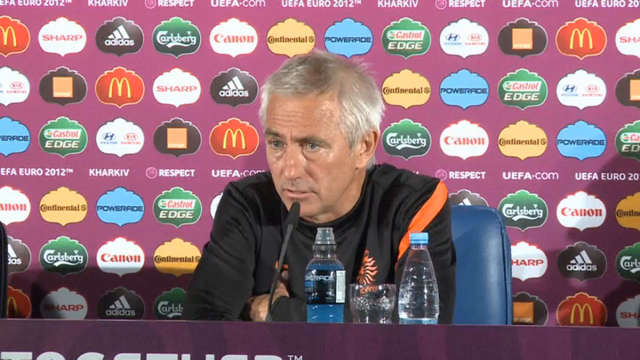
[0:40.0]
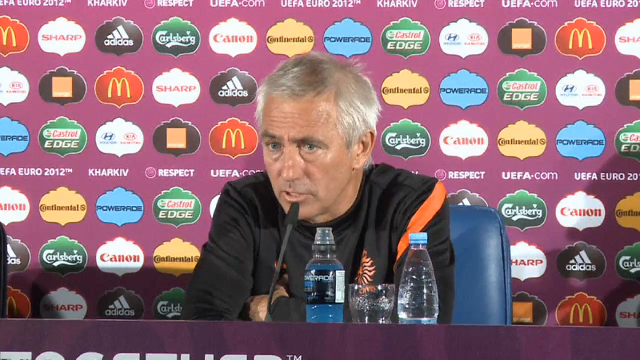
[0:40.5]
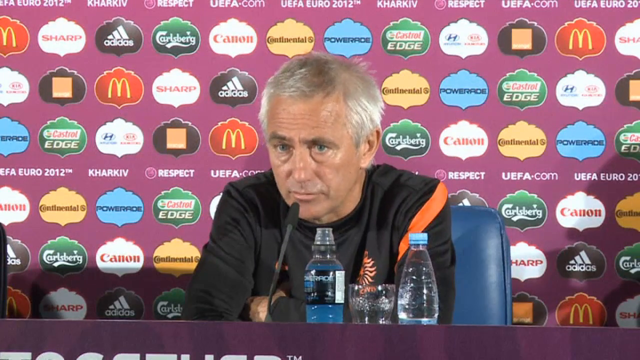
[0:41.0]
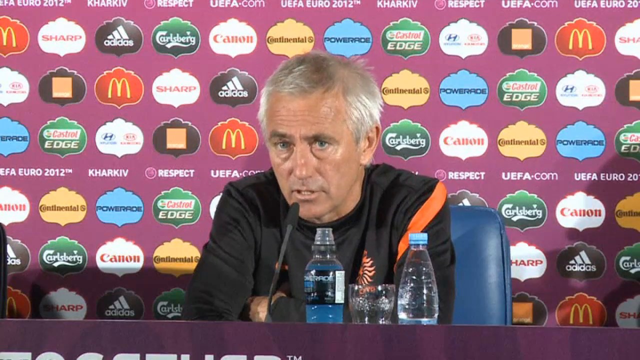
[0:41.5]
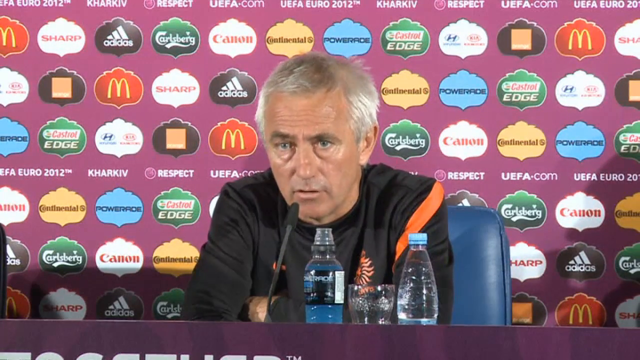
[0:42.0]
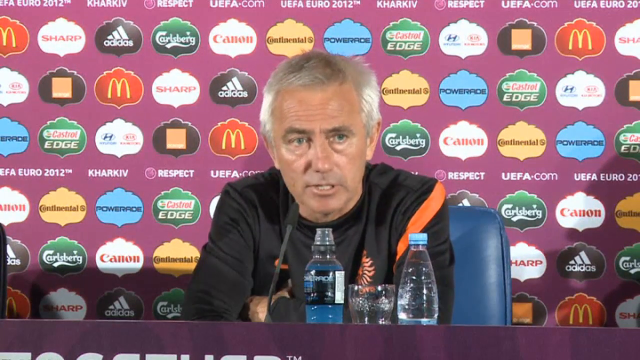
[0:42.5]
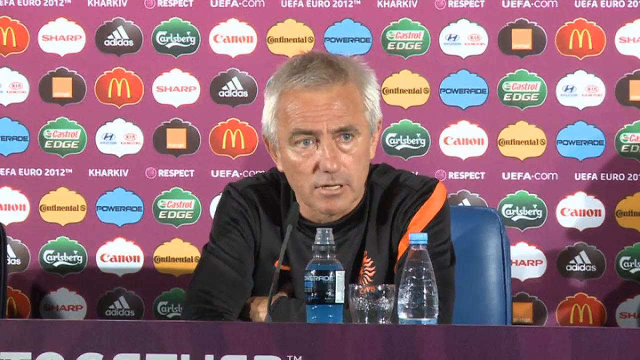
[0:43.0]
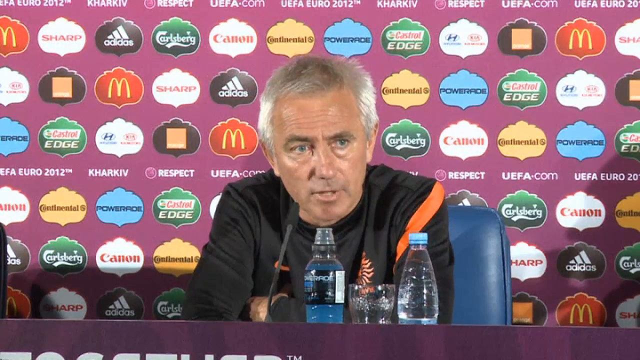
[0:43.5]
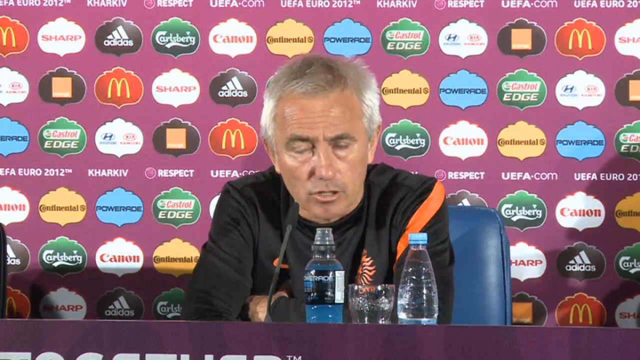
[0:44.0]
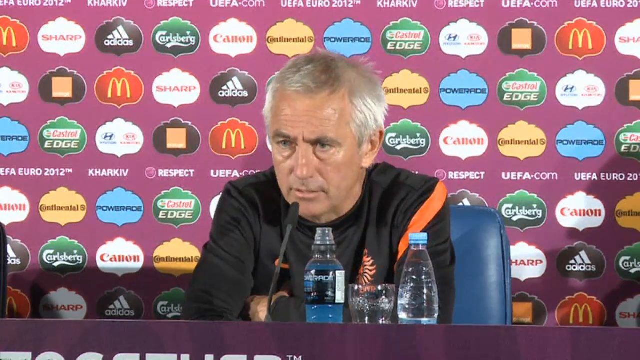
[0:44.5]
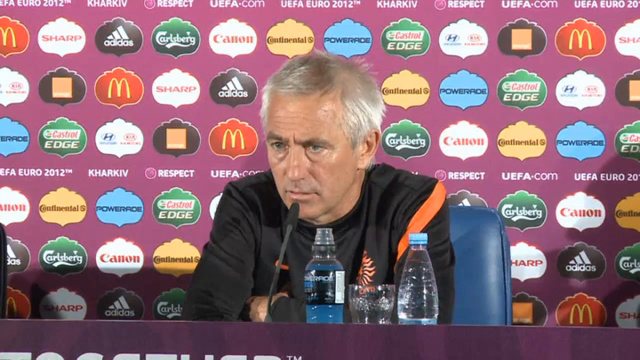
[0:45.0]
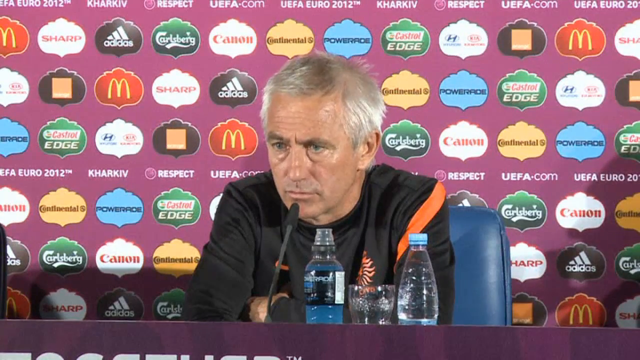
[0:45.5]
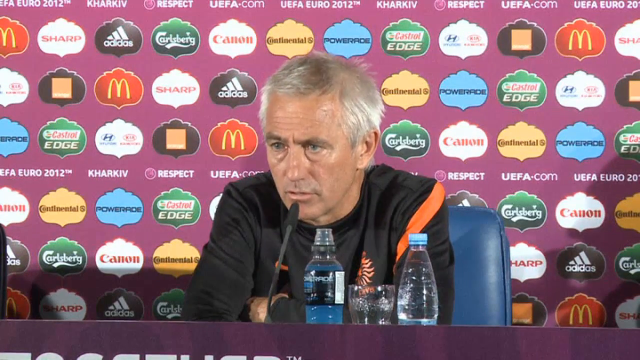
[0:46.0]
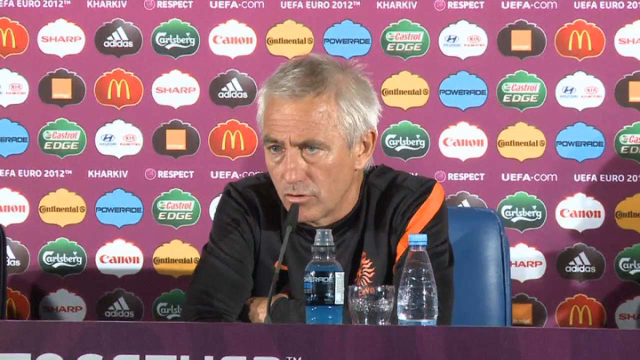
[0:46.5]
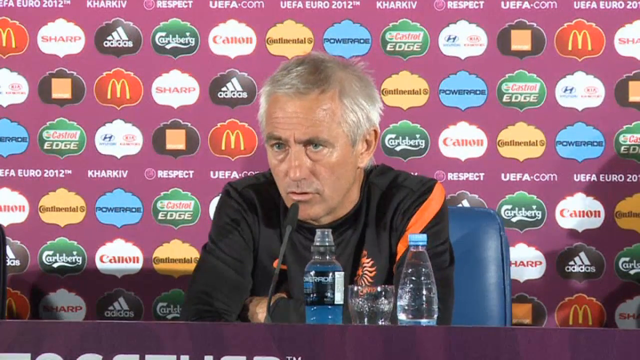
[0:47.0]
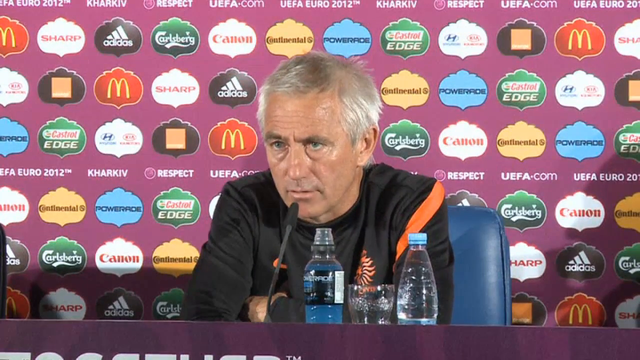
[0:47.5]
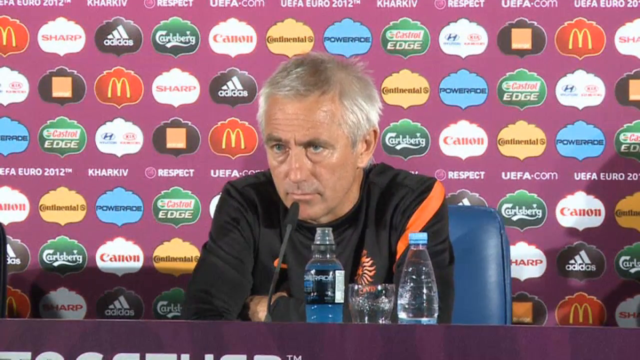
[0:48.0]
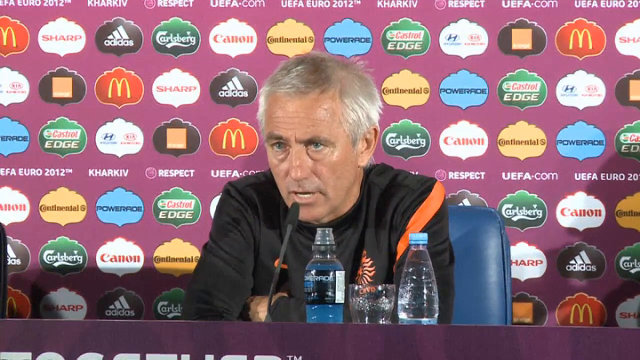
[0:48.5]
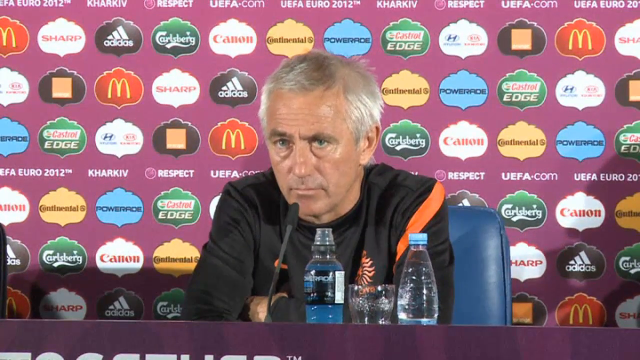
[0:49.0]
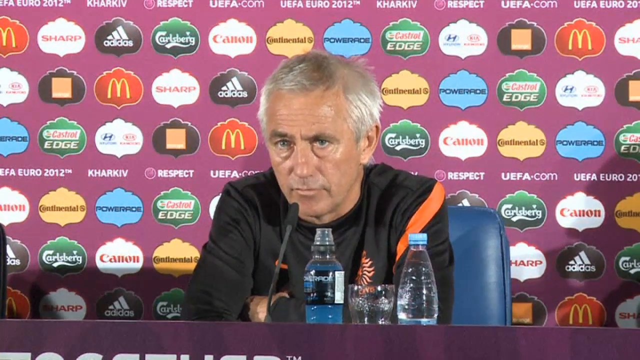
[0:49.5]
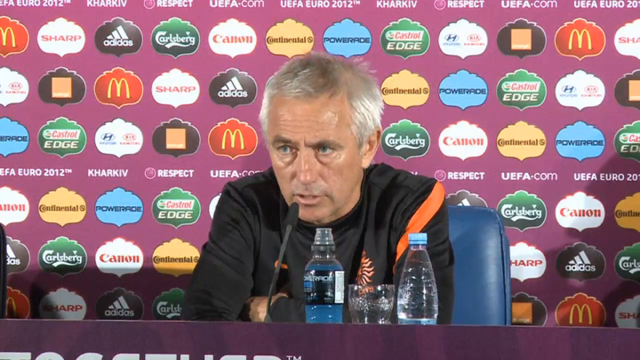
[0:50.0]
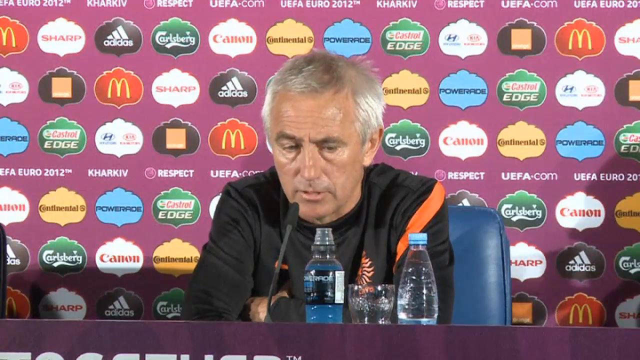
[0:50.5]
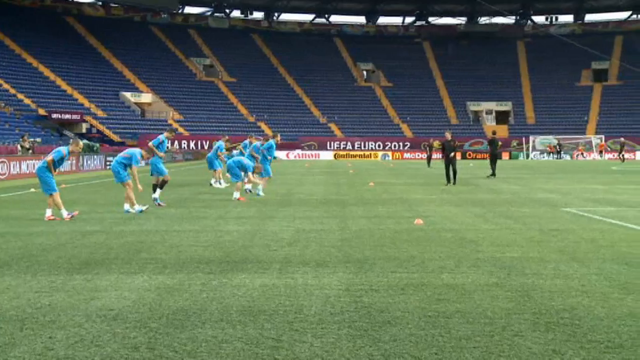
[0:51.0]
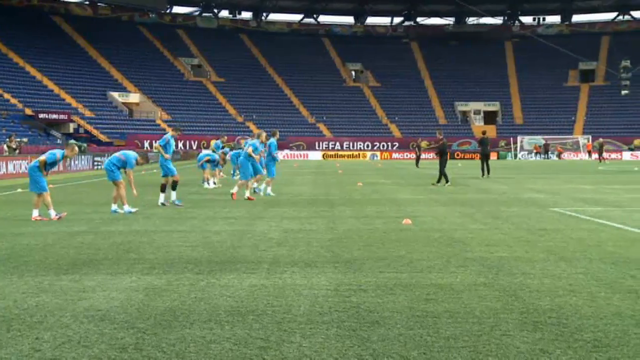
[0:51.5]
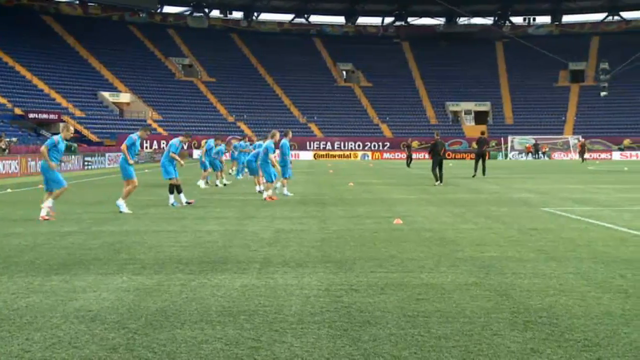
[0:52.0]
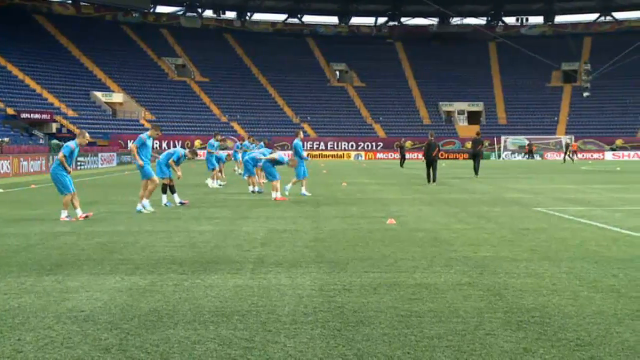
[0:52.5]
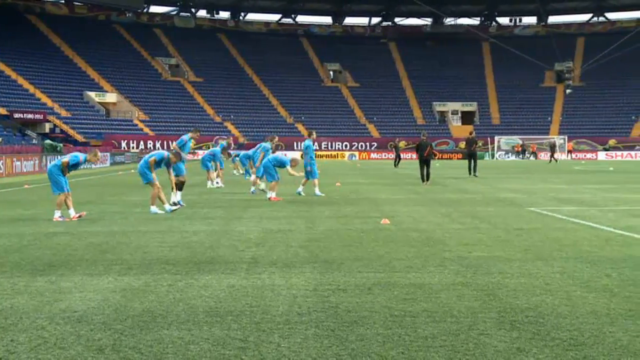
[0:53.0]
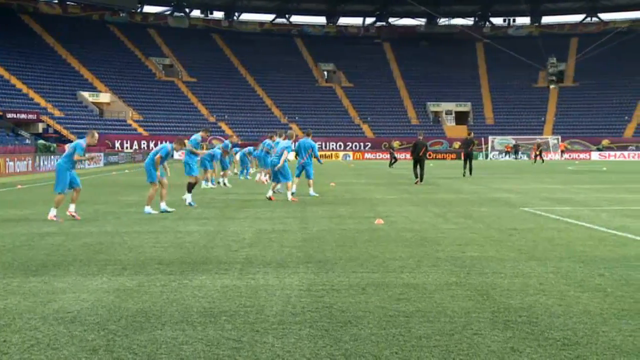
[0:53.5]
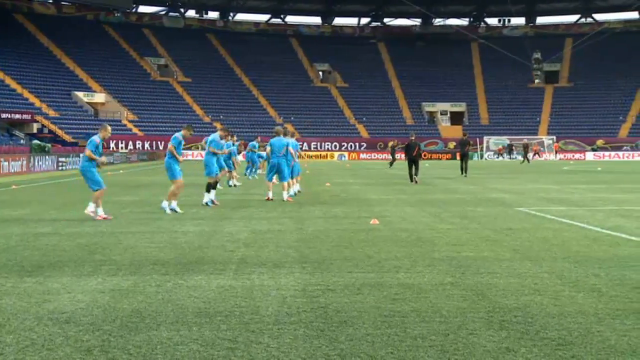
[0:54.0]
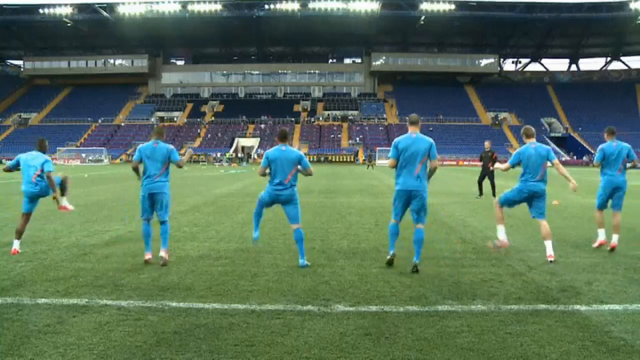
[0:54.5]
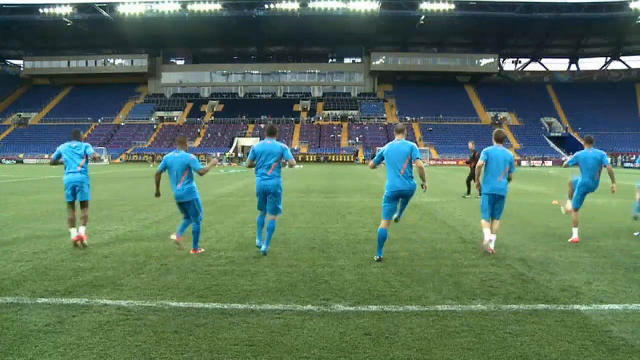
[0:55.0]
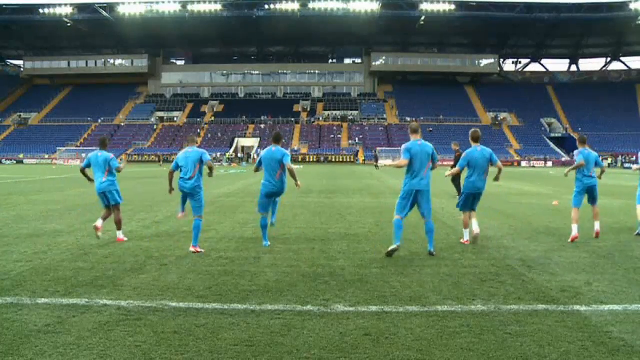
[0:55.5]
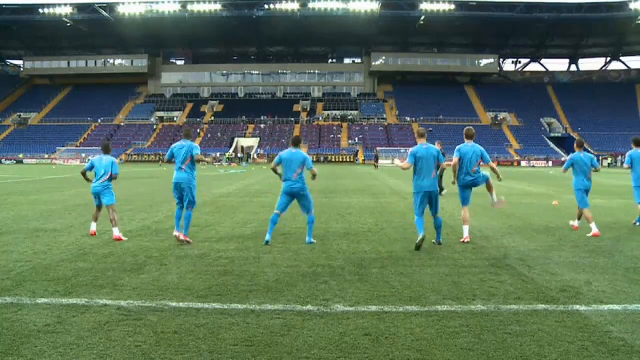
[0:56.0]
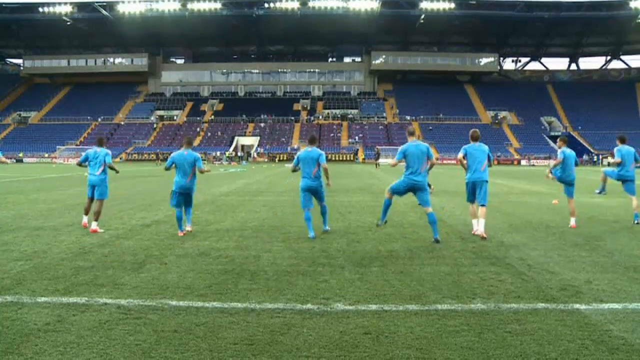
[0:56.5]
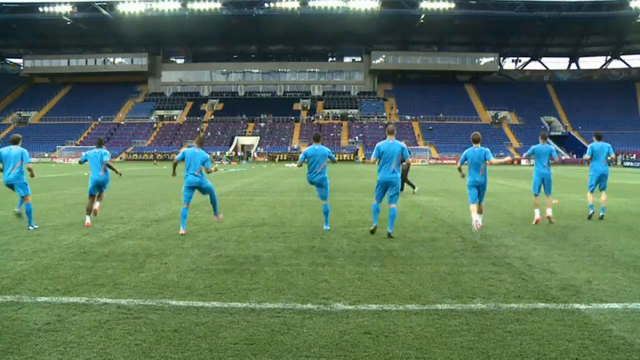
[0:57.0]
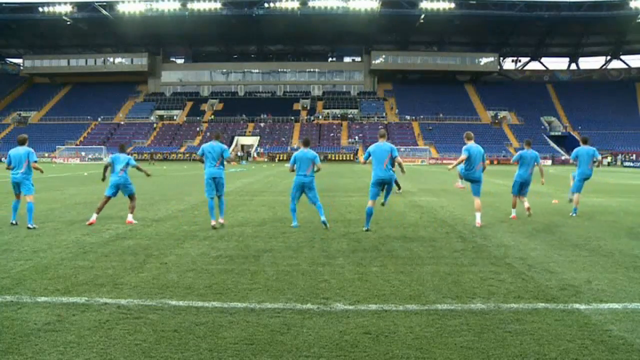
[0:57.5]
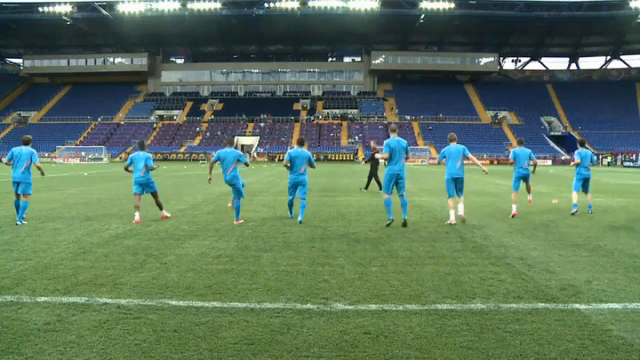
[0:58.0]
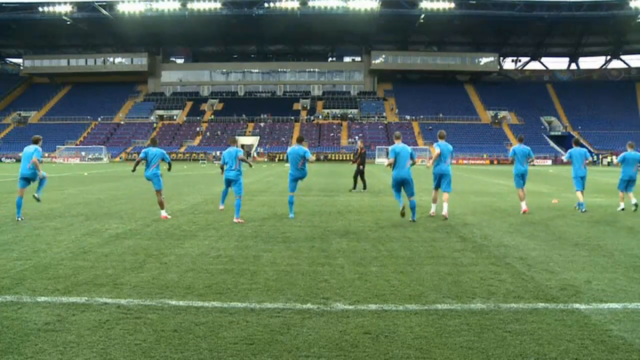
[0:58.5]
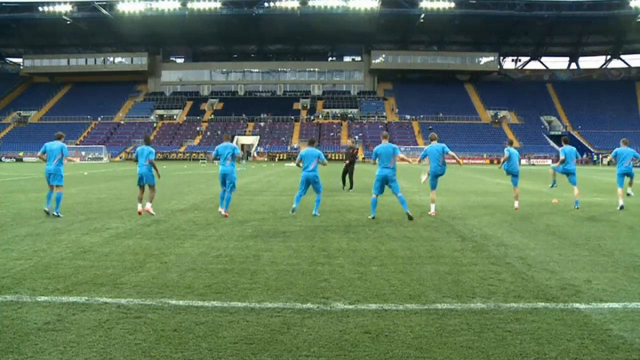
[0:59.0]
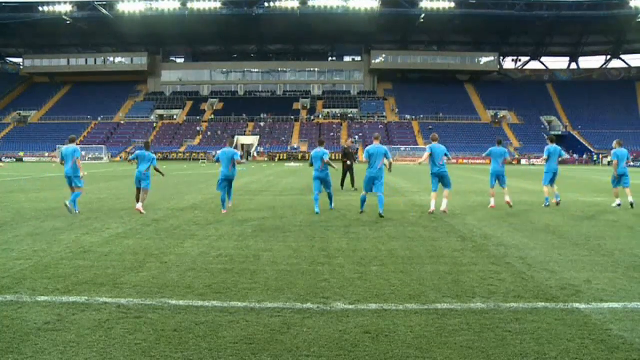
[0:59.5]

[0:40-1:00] The man leans in and talks, nods, and looks a little to the left toward the reporters. He curls his lips, looks back to the center of the room, and his head stays slightly dropped. He nods a little; he is fairly tan. He closes his mouth as he pauses for a moment, nods a little again, answers, and then looks down at the table. The video cuts to the players on the field taking several light little jogs and little steps, then leaning forward to stretch and reaching down for their feet with one foot straightened. Another cut shows a different warm-up in which they take very big steps forward while spinning one leg outward at a time and raising their knees, sort of pivoting their hips. A few of them look like they are wearing pants because their blue socks nearly touch the base of their long shorts.